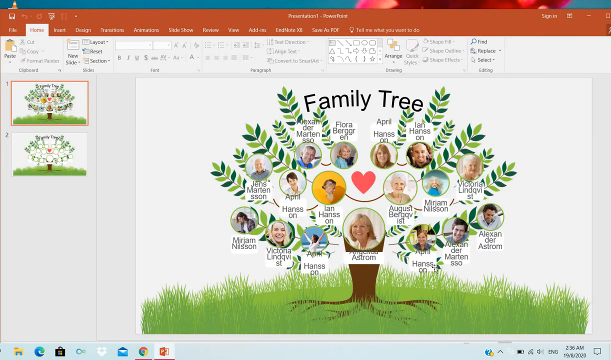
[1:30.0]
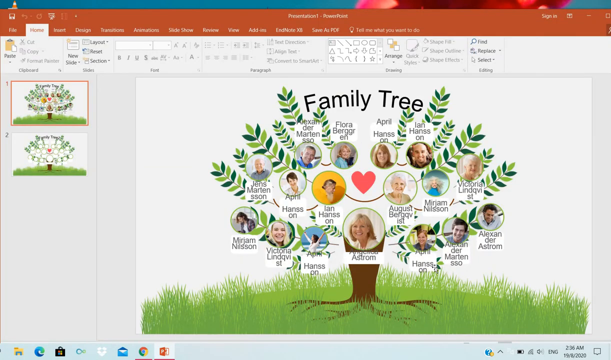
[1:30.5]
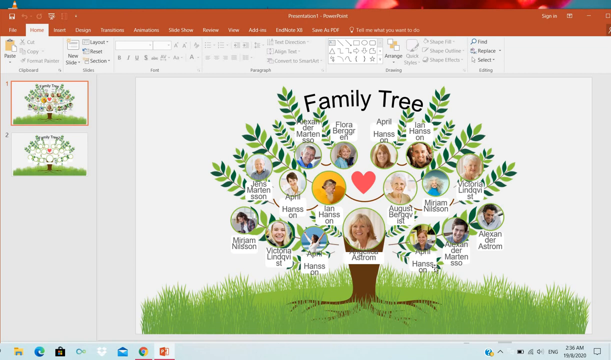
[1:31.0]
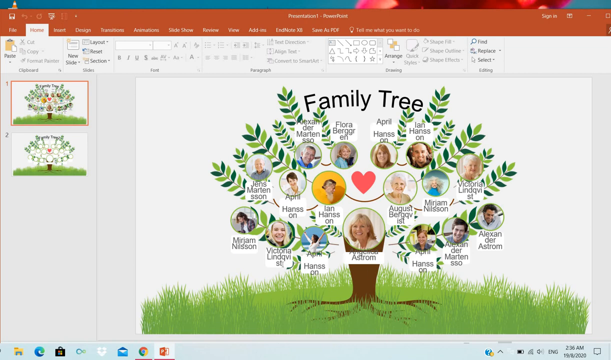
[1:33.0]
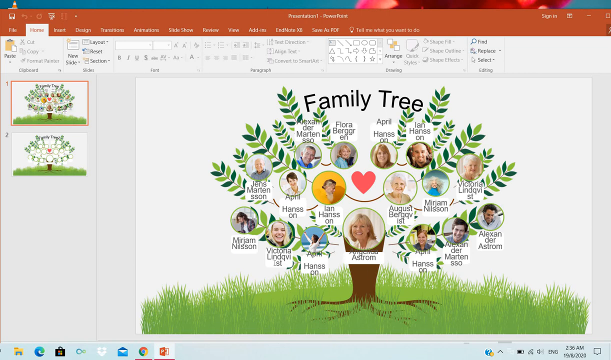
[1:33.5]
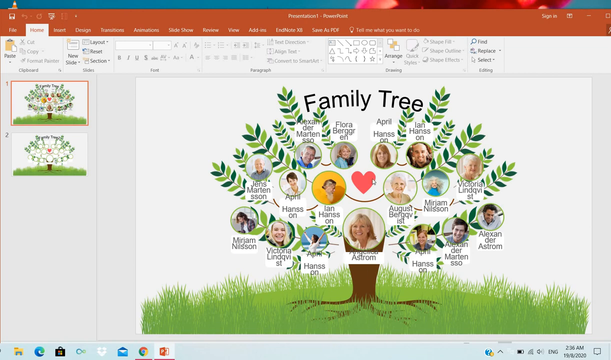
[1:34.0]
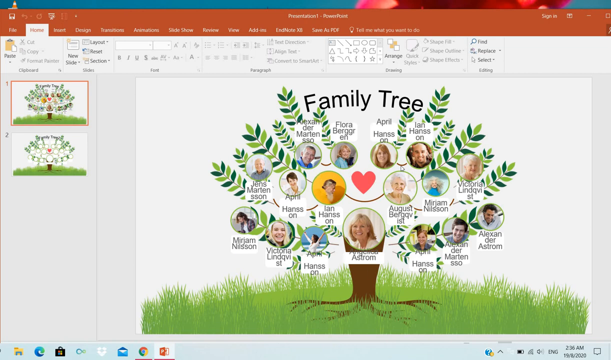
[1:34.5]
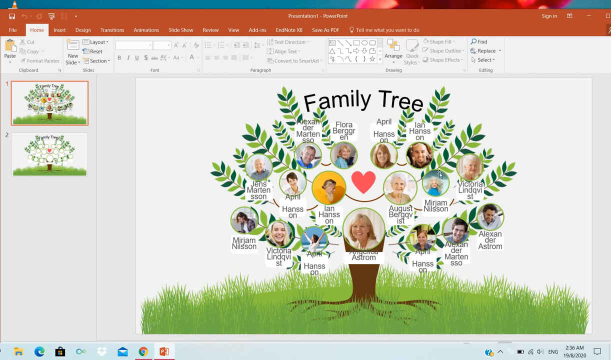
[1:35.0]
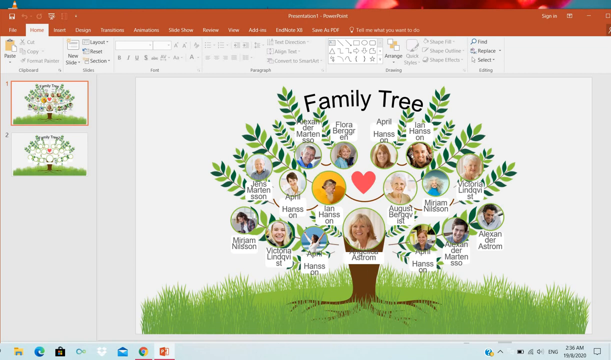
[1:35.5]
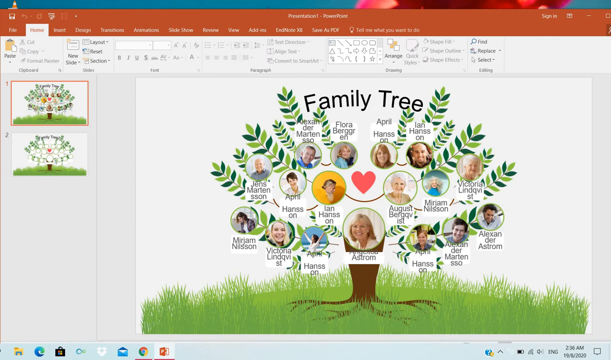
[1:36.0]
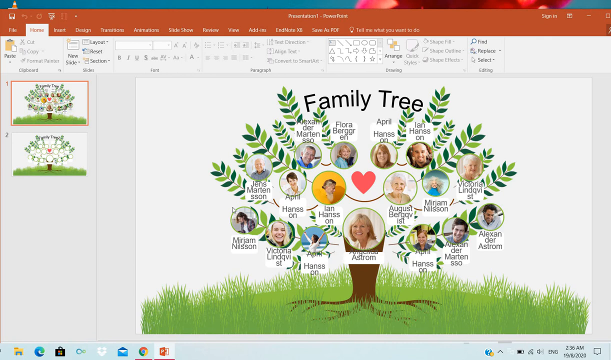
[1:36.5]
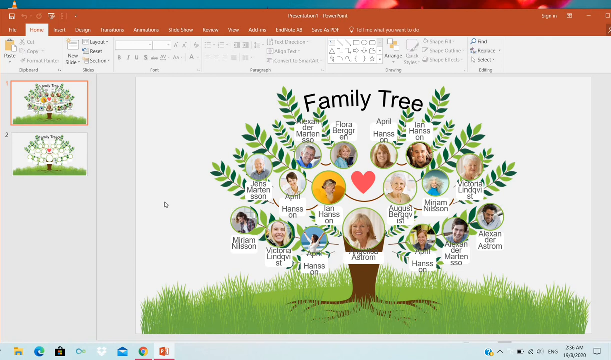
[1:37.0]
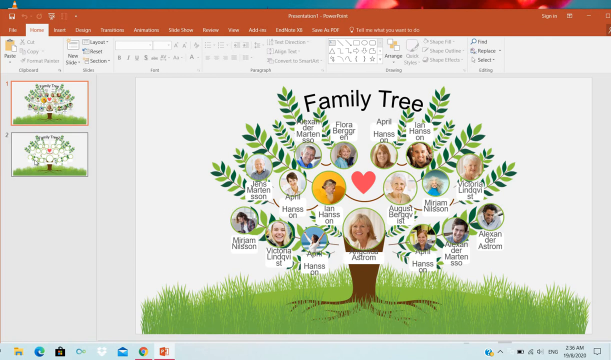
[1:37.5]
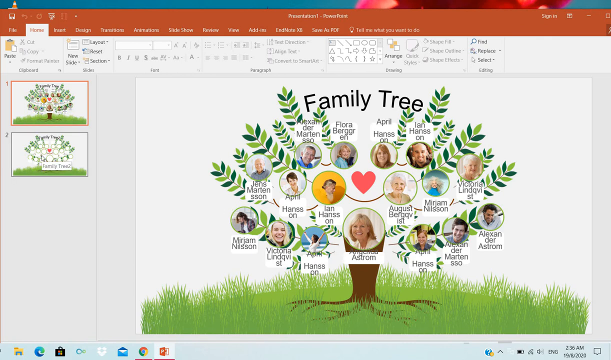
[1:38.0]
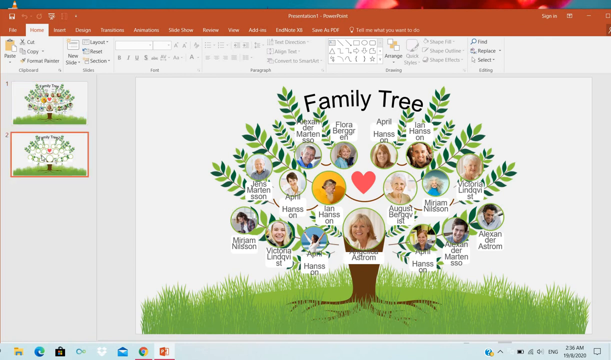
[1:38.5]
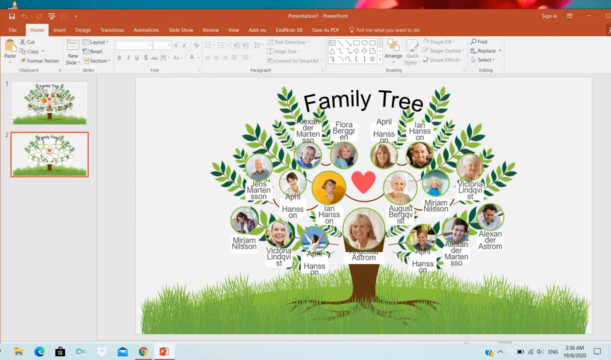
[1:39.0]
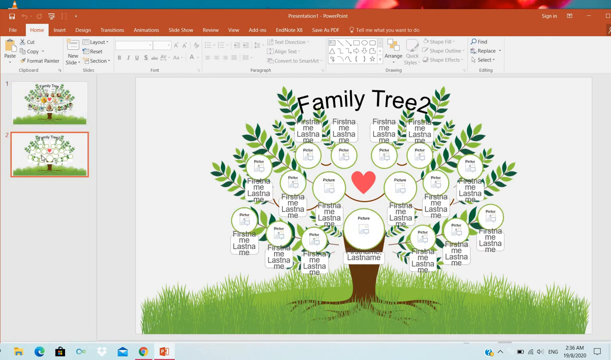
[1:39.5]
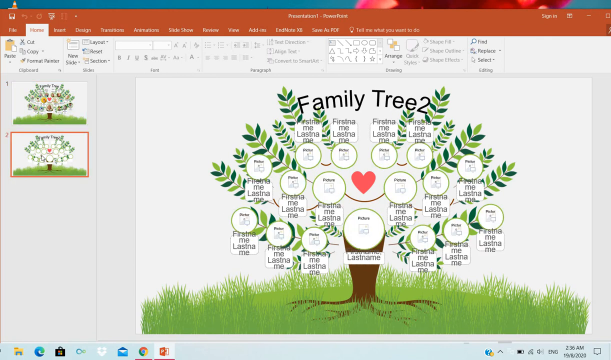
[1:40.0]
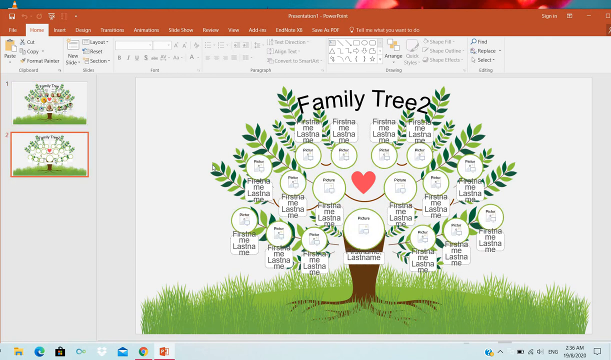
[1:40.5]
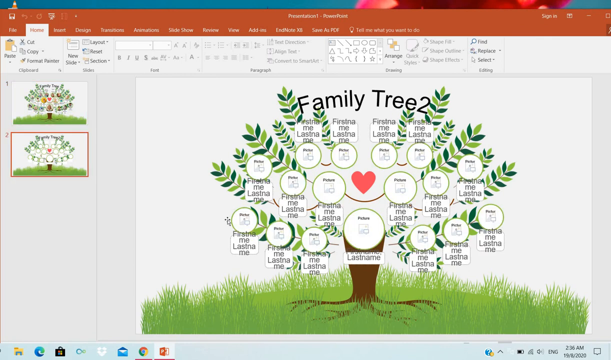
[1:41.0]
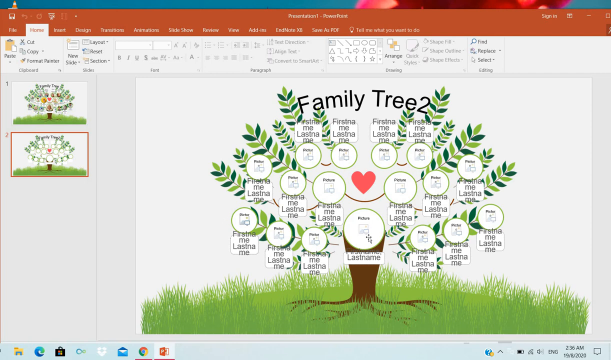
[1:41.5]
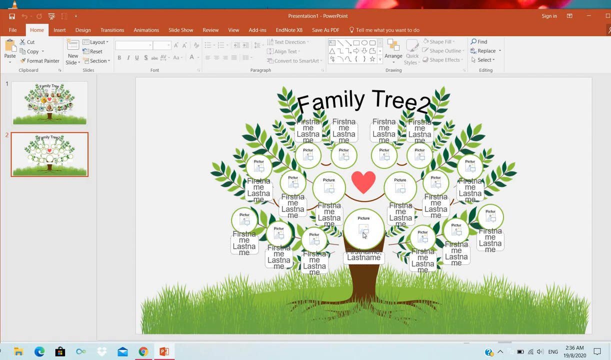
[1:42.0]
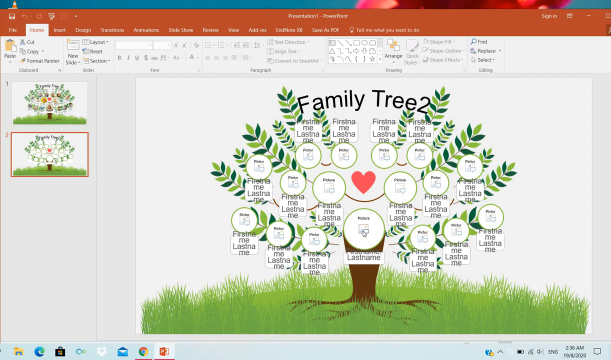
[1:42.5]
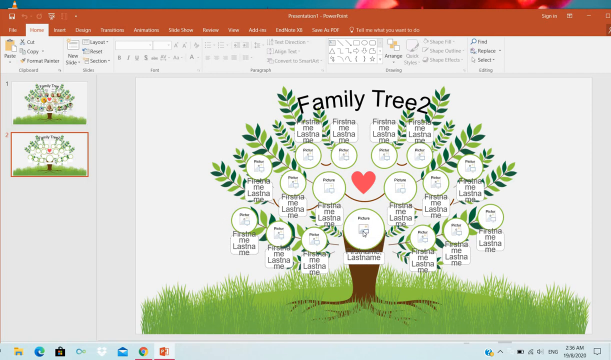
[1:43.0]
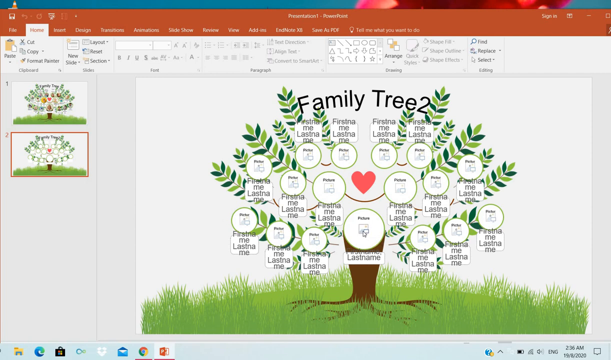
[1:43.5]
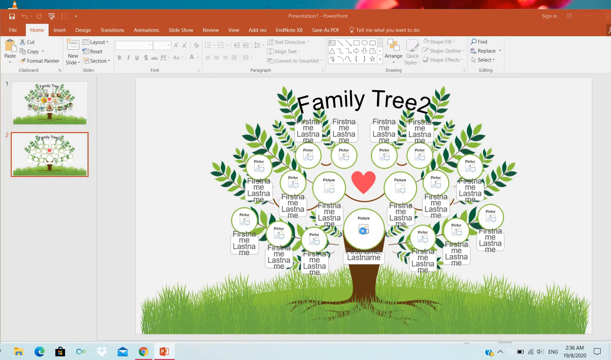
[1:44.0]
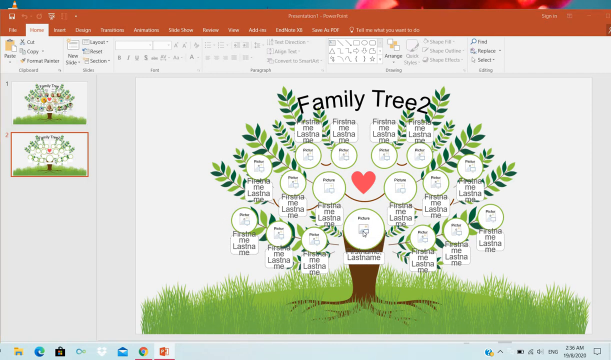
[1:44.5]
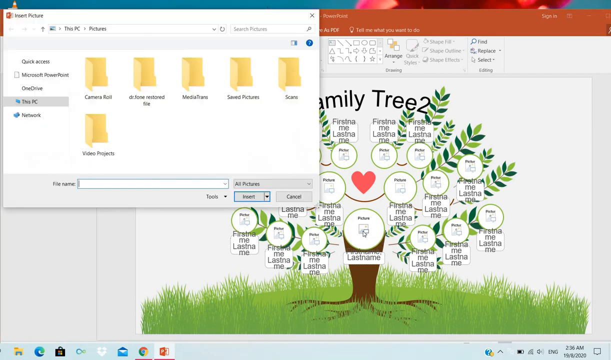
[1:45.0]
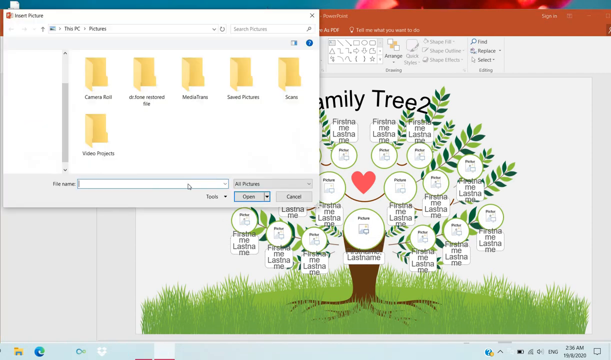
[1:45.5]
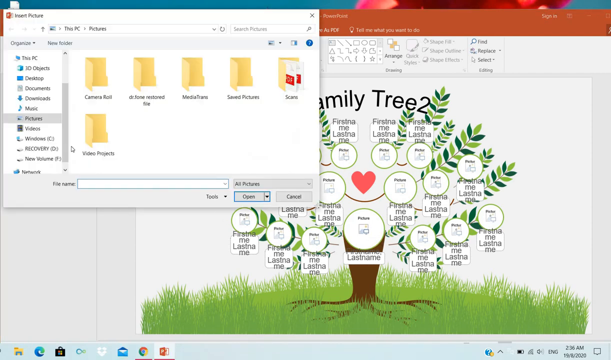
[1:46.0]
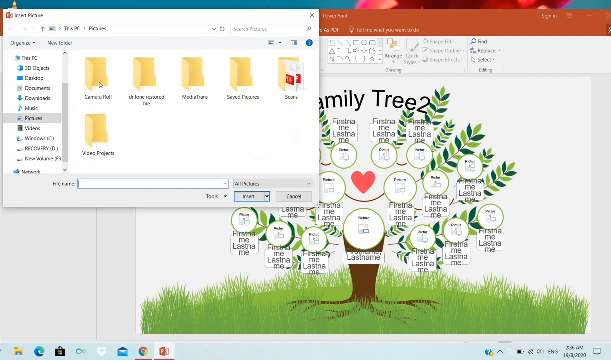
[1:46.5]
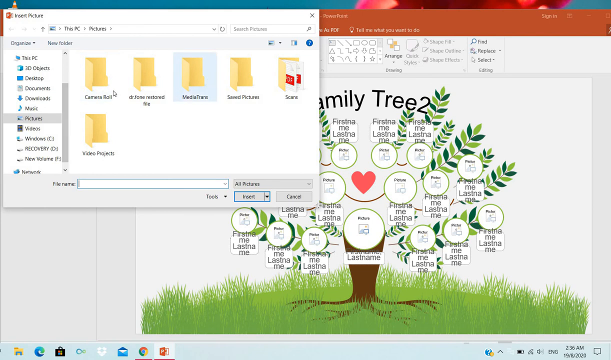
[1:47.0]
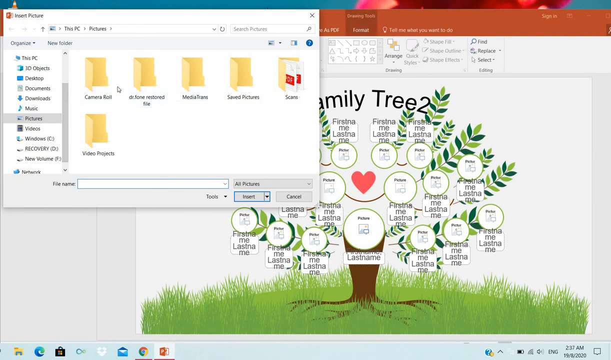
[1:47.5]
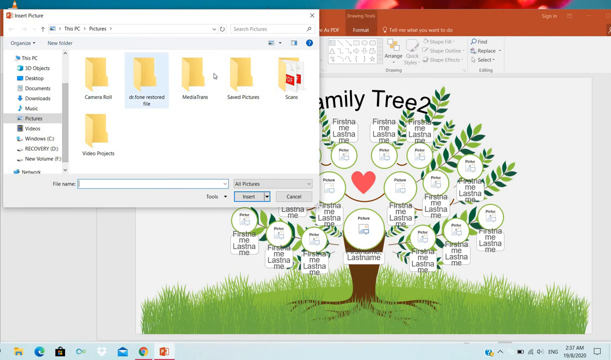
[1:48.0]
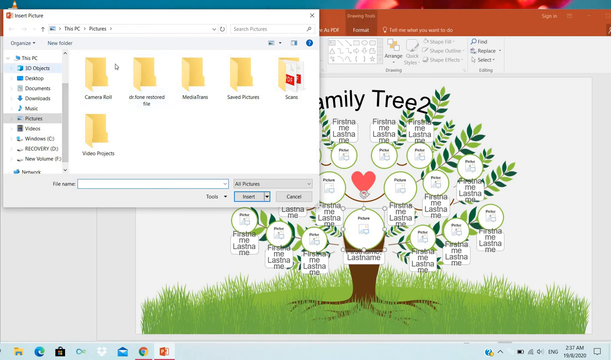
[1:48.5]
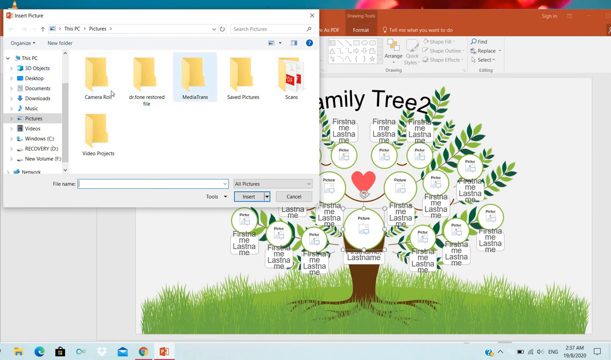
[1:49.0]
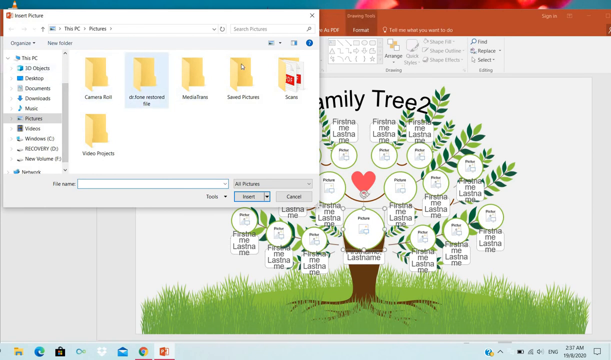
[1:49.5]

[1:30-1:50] The slide shows an illustrated tree with a thick brown trunk, visible only where it protrudes at the bottom of the family tree, which already has pictures and names of people on it. The trunk gets slightly smaller and thinner towards the bottom, and the roots branch out into the grassy ground the tree stands on. The tree is in the middle of the image and looks like it is standing on some kind of hill with lighter green grass. Its branches end in leaves at the edges, some dark green and some light green. At the top, "family tree" is written in black, the words slightly rounded. Pictures of many people are at the top, seemingly starting at the top left and top right; one side says "April Hanson", and the other side has names such as "Flora Berg" and one ending in "Alexander Martenso". A swinging little brown line connects some of the images.